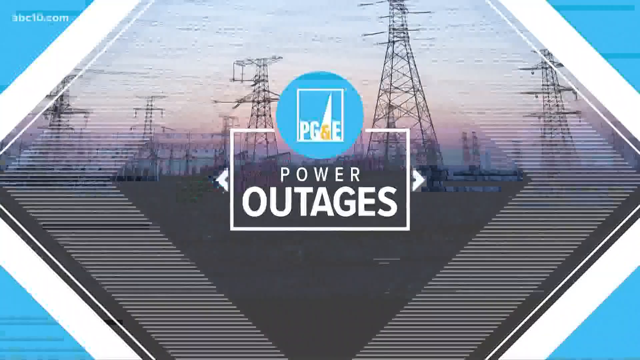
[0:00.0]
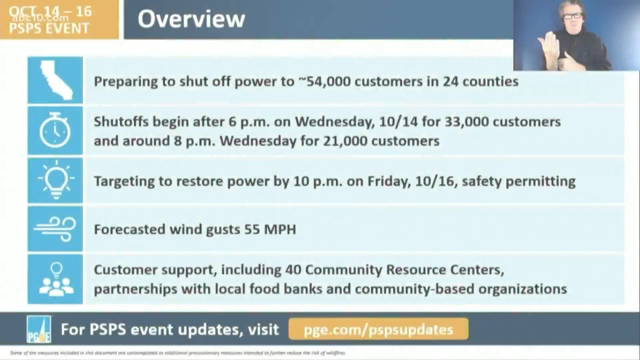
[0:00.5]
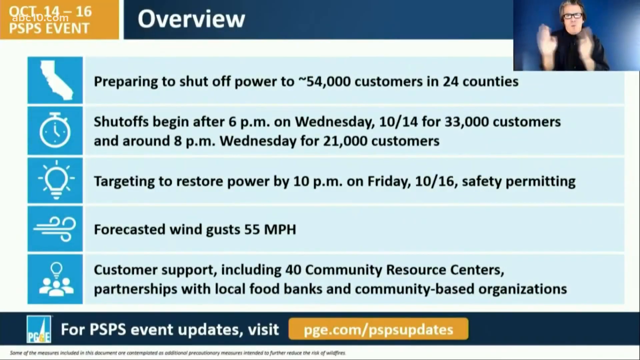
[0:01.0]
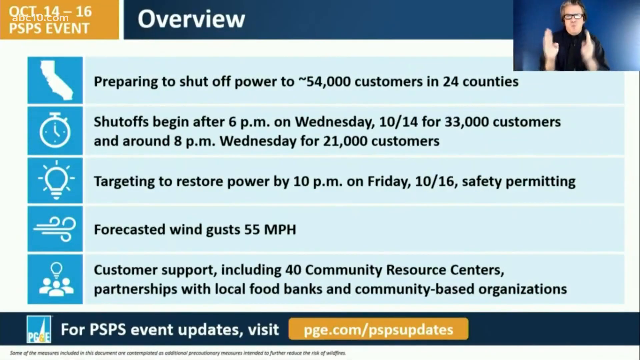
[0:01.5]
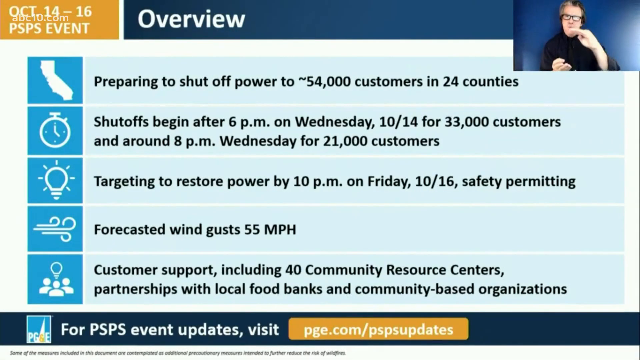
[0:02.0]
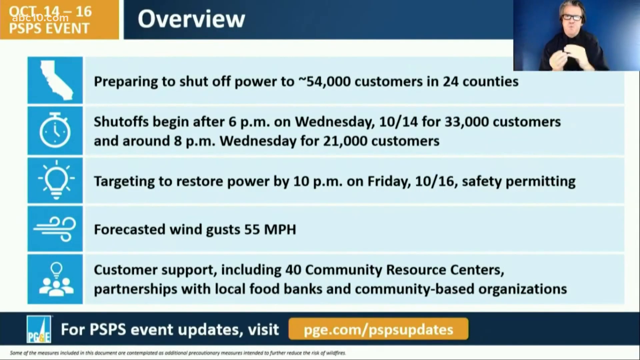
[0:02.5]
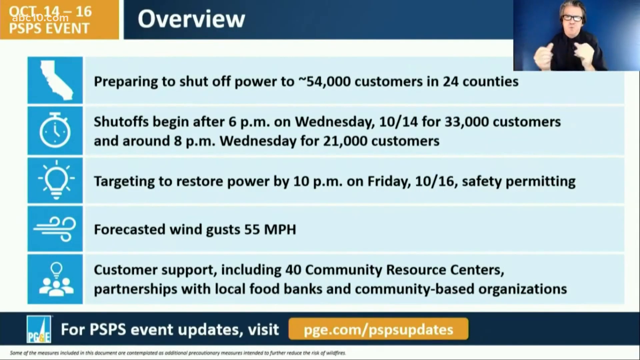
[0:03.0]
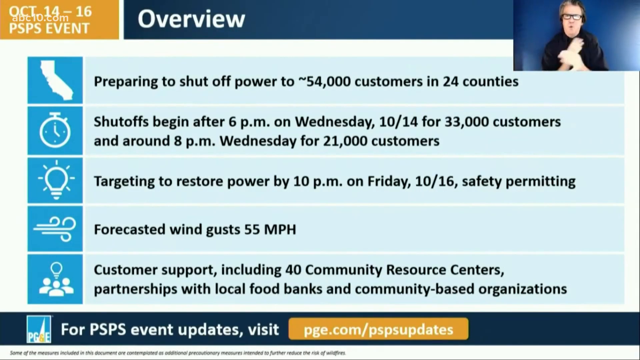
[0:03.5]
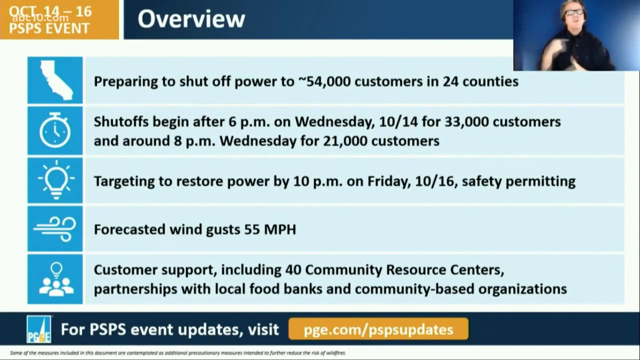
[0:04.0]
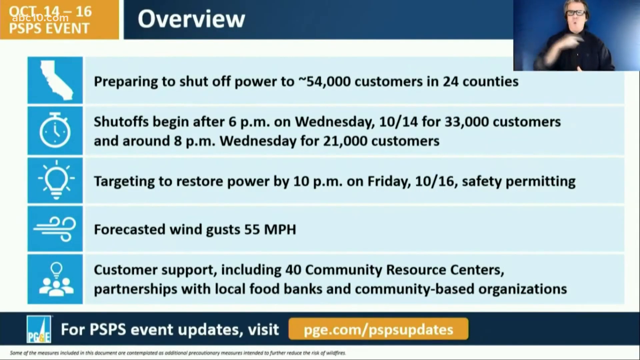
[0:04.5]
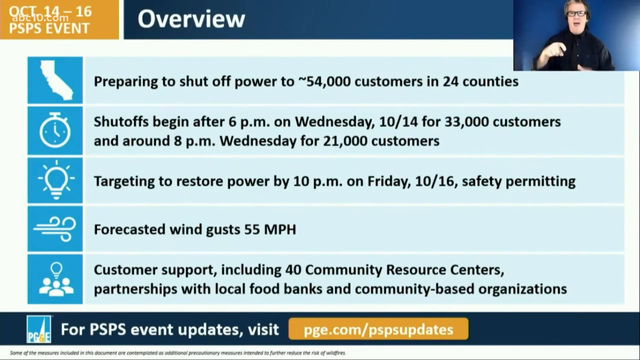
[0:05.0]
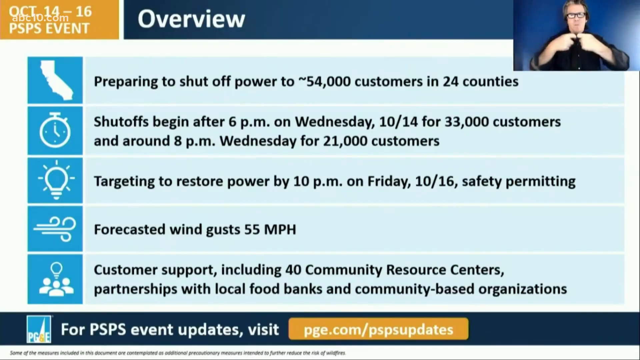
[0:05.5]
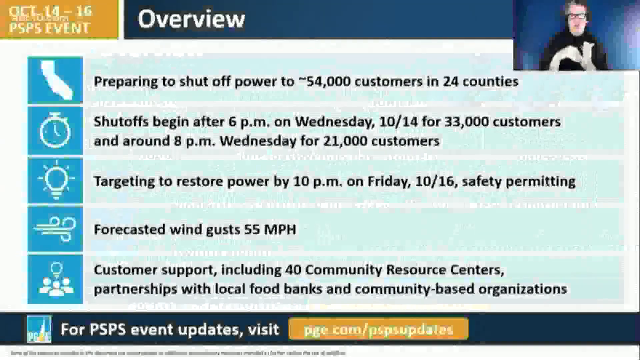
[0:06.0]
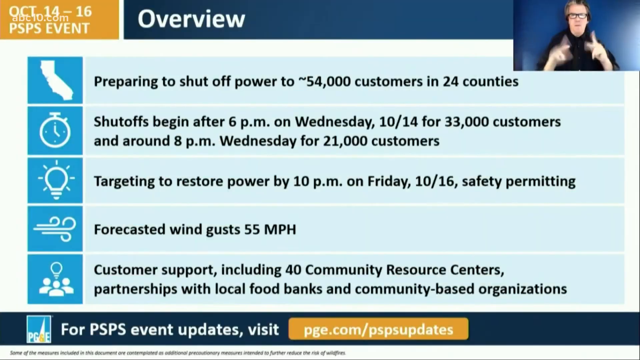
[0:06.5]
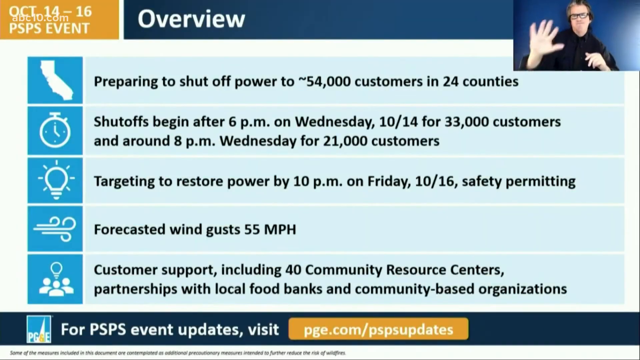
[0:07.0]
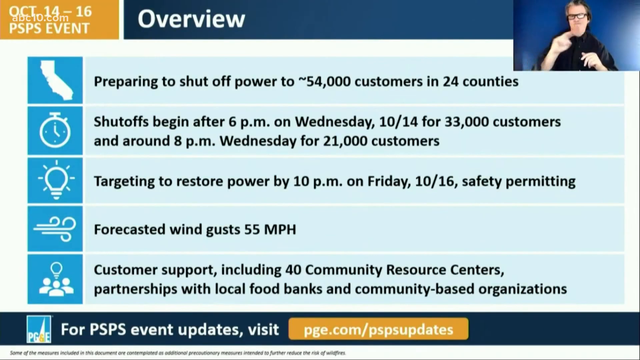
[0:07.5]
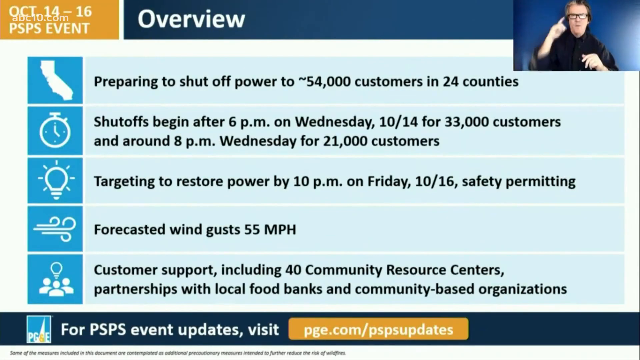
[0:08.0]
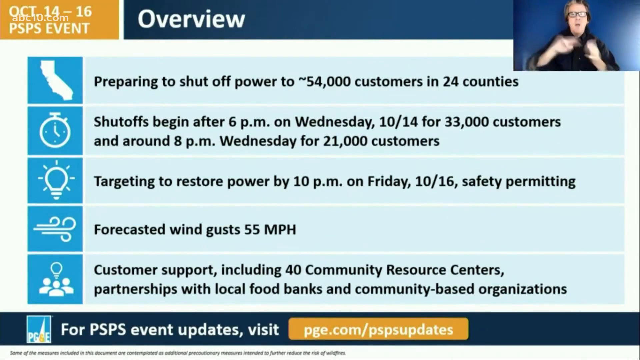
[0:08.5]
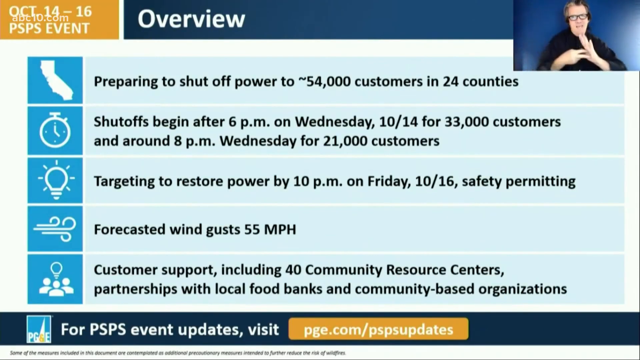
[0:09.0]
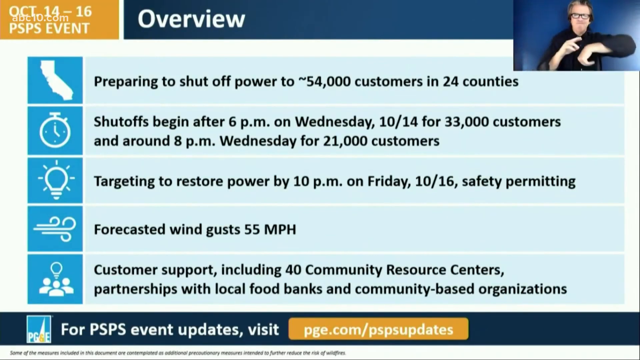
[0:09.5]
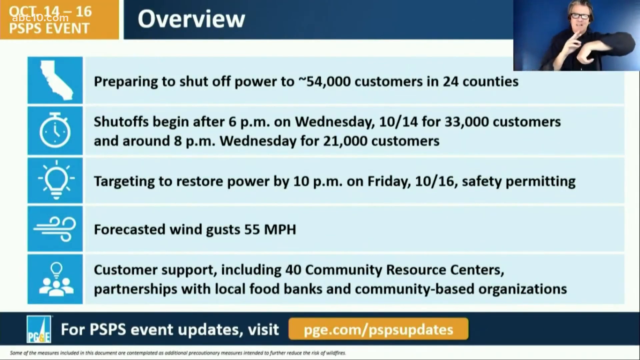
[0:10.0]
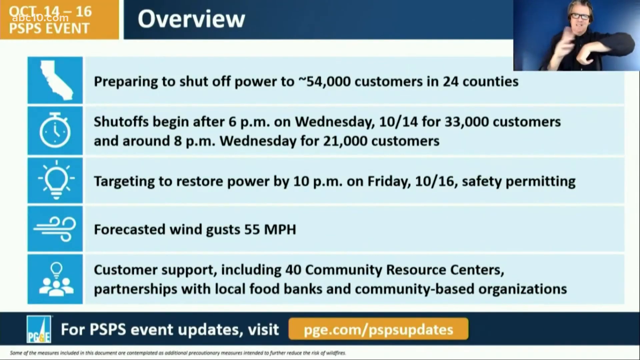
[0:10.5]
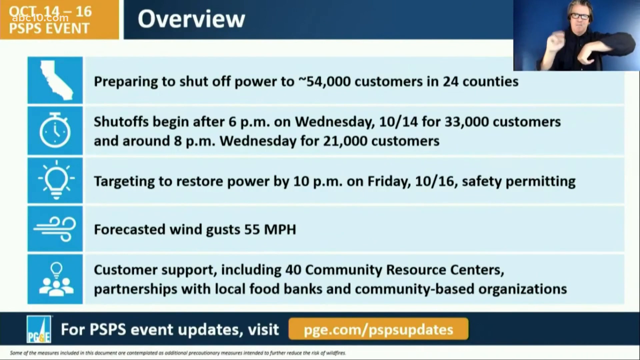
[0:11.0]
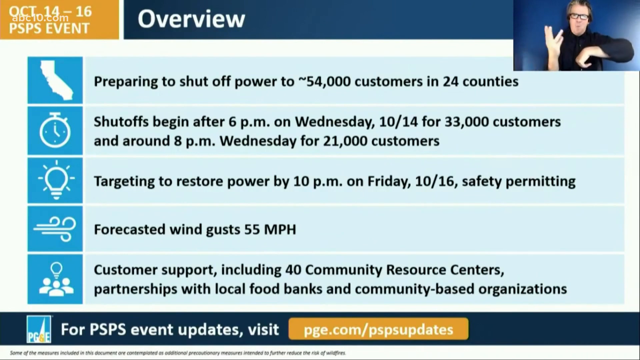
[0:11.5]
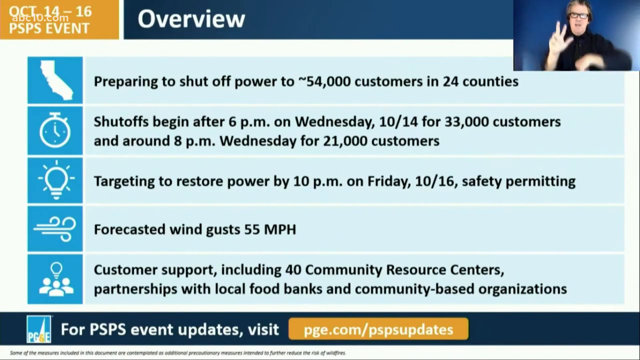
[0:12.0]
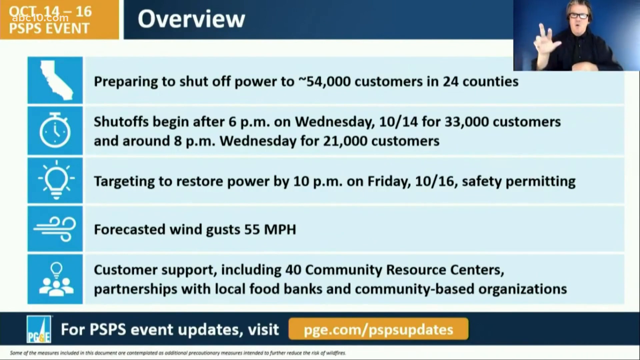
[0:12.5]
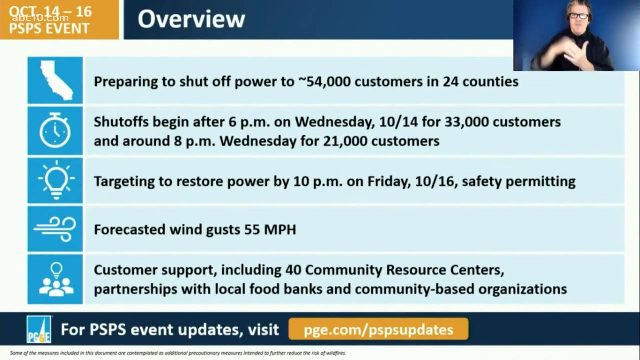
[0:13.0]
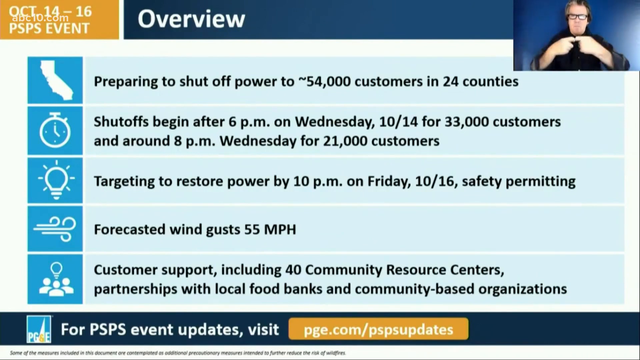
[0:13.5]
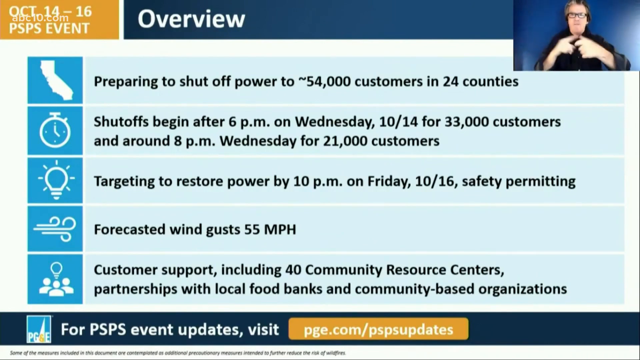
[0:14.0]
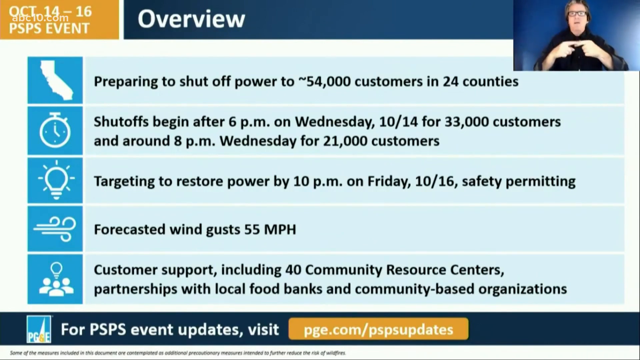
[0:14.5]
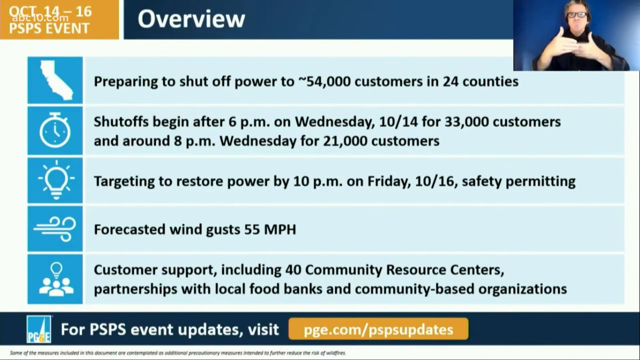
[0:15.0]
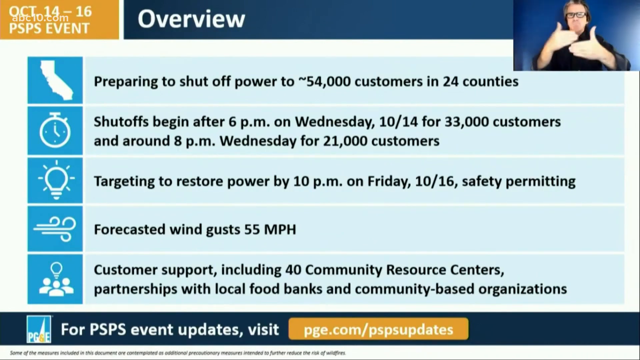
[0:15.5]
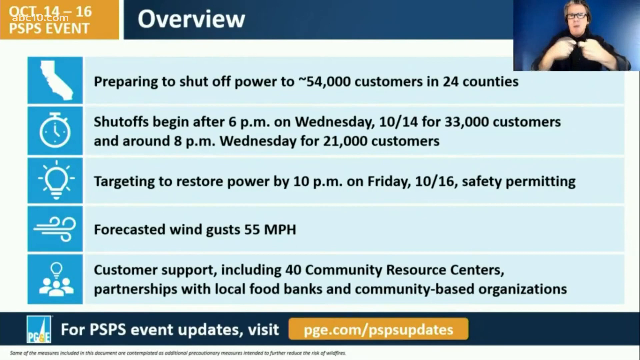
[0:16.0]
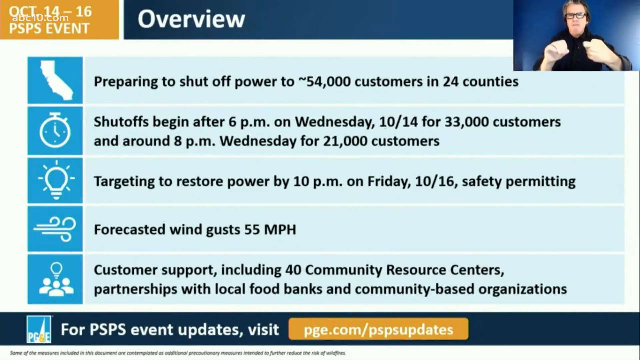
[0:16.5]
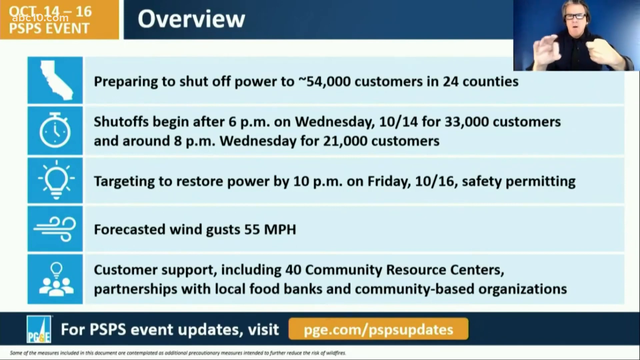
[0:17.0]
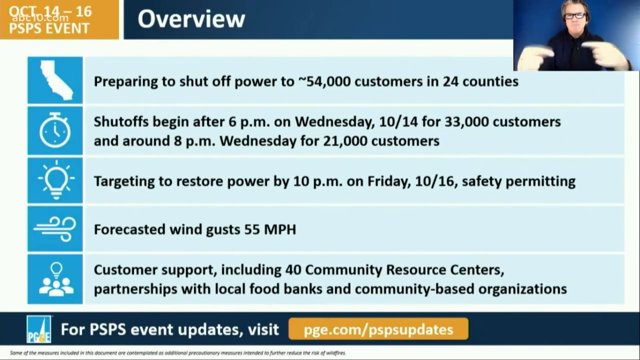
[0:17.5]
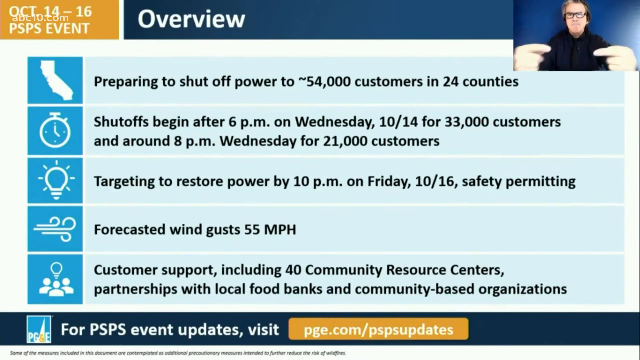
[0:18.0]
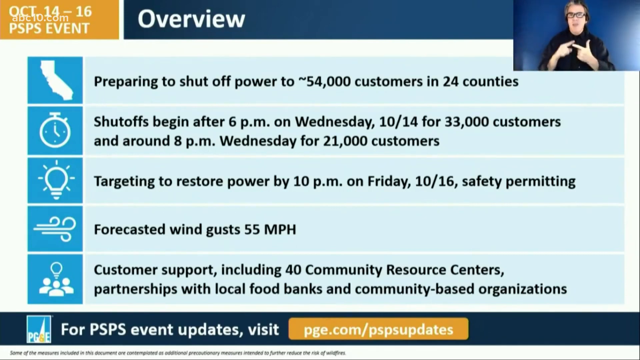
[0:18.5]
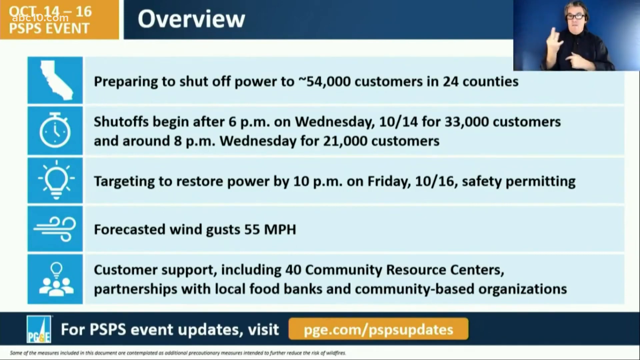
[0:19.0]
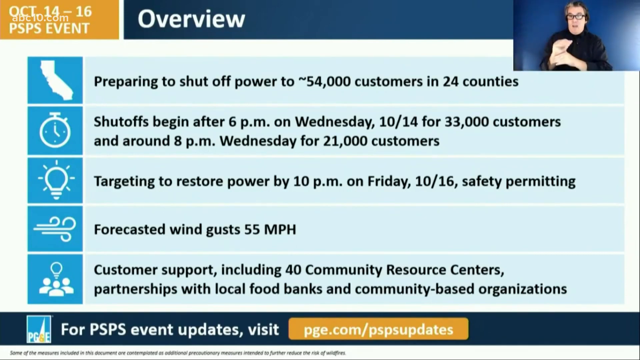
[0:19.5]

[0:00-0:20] A newscast about power outages quickly transitions to an overview page, with a title bar at the top of the page in white font. In a tiny thumbnail image in the upper right-hand corner of the broadcast is a Caucasian man who is talking. The page concerns October 14th to 16th and the preparation to shut off power to 54,000 customers in 24 counties. There is an image of a clock, and a little California icon suggests this is apparently happening in California. The shutoff is set for 6 p.m. on Wednesday, impacting 33,000 customers, and for 8 p.m. on Wednesday for 21,000 customers. Next to a white lightbulb icon, text to its right reads "targeting to restore power by 10 p.m. on Friday, 10, 16, safety permitting." To the right of a gusty wind icon, text states that wind gusts of 55 miles an hour are forecast. One more icon shows a group of people, and to its right the text reads "customer support including 40 community resources centers, partnerships with local food banks and community-based organizations." While the information is presented, the person in the upper right-hand corner is doing sign language; the thumbnail is so small that the person could also be a woman, although the signing with the hands is easy to see.